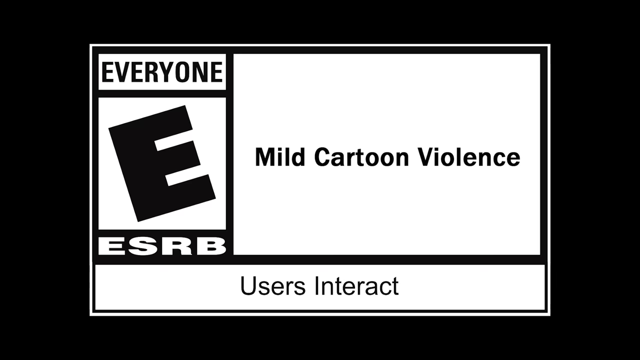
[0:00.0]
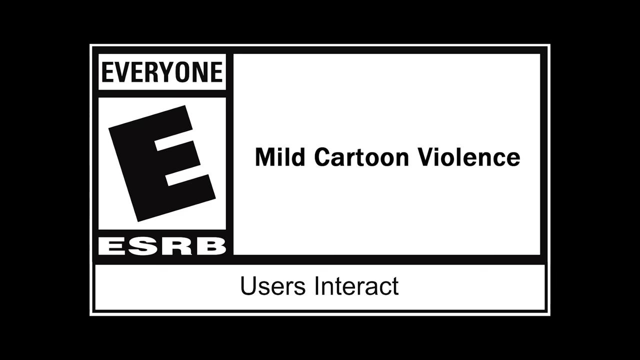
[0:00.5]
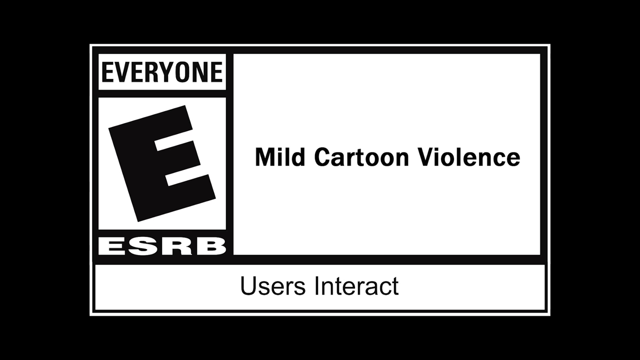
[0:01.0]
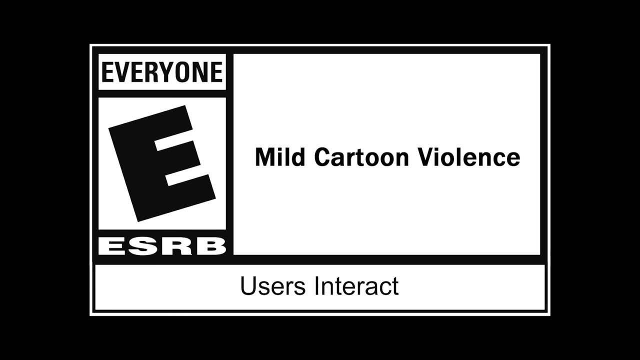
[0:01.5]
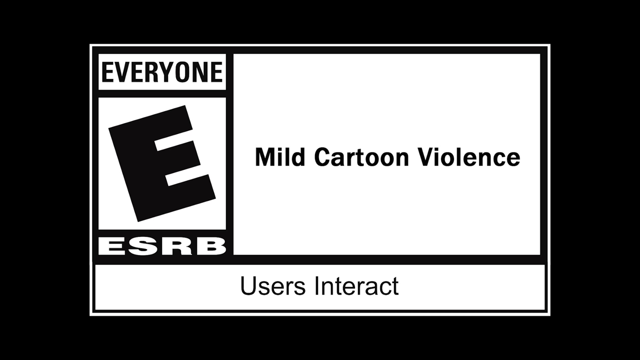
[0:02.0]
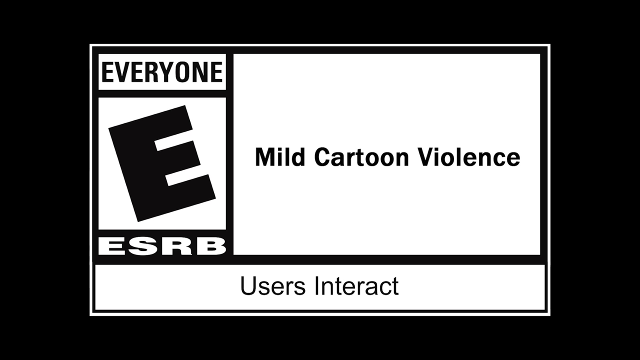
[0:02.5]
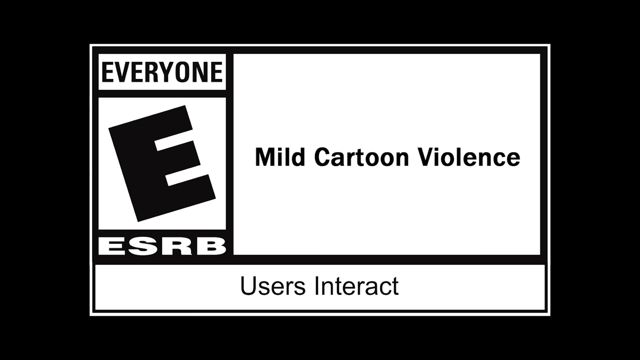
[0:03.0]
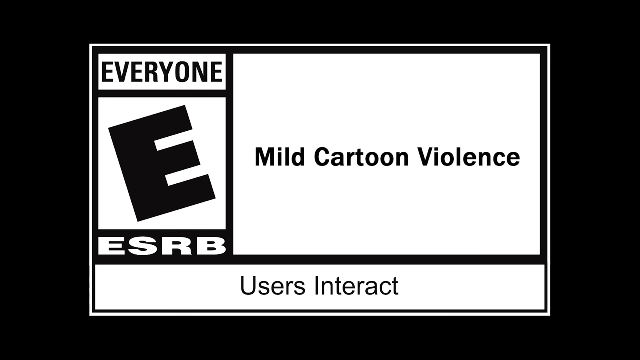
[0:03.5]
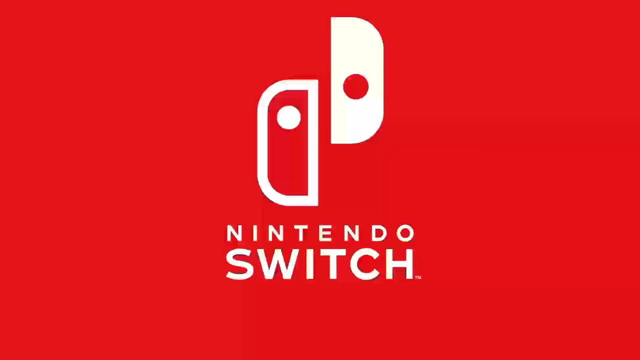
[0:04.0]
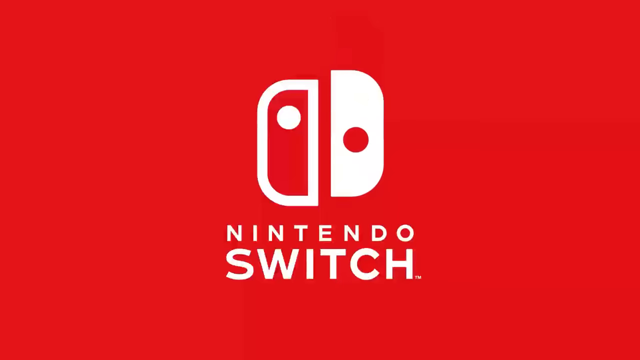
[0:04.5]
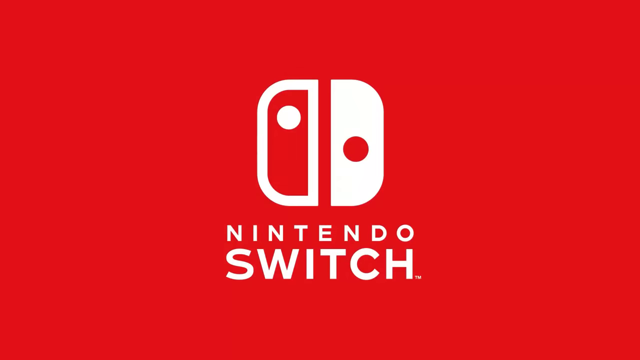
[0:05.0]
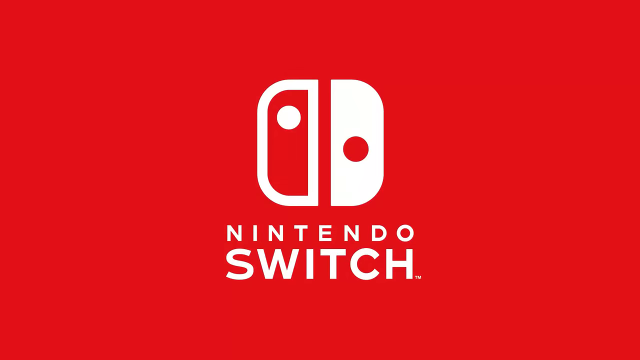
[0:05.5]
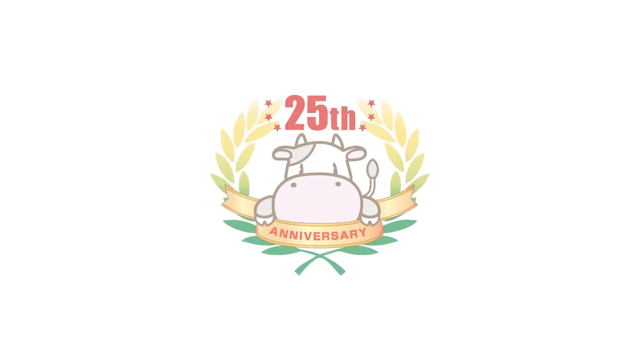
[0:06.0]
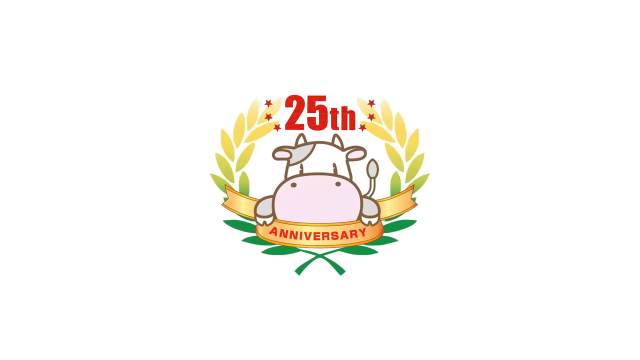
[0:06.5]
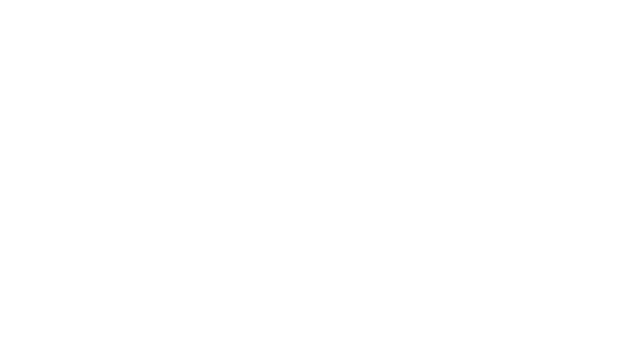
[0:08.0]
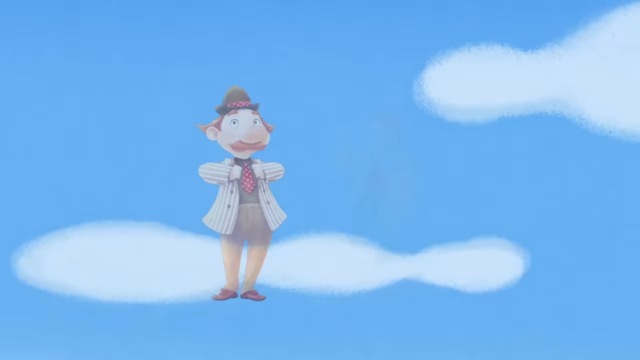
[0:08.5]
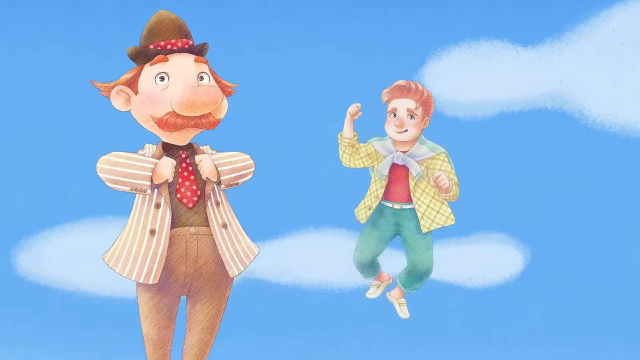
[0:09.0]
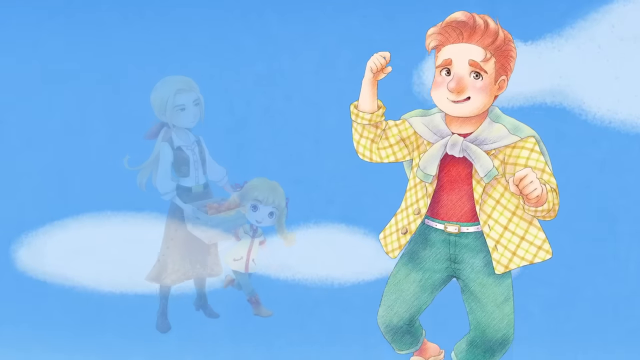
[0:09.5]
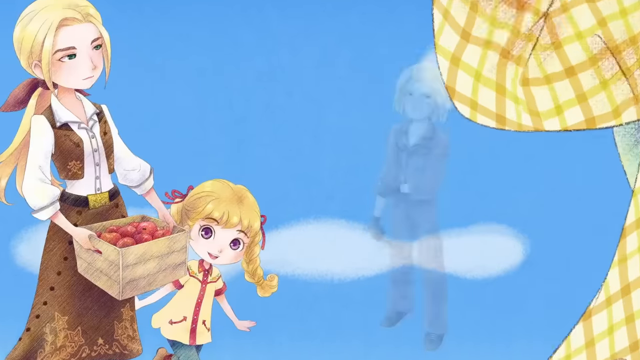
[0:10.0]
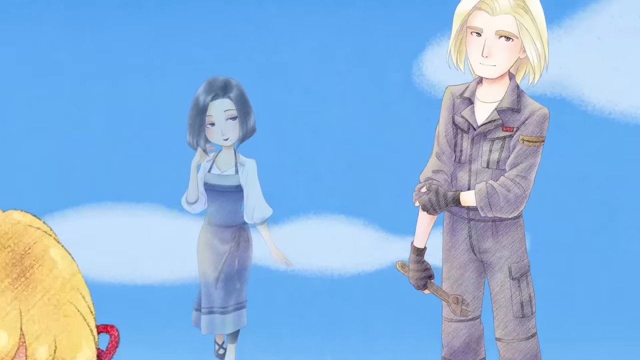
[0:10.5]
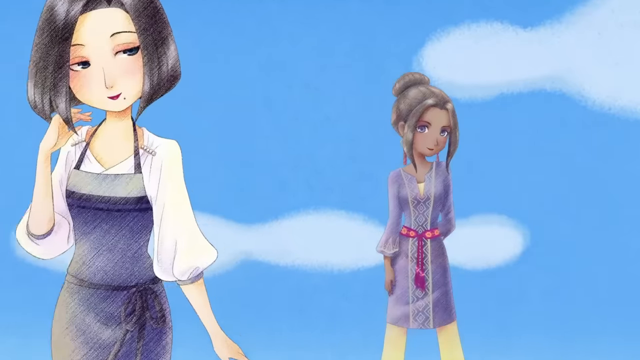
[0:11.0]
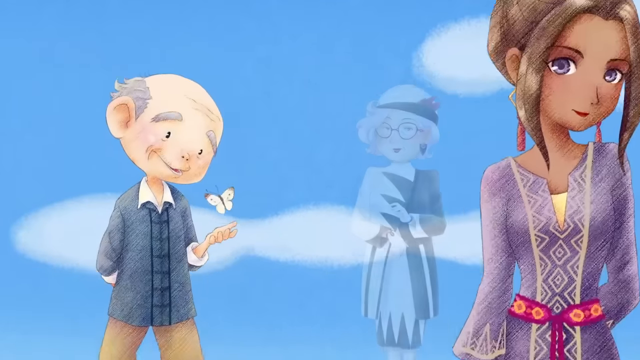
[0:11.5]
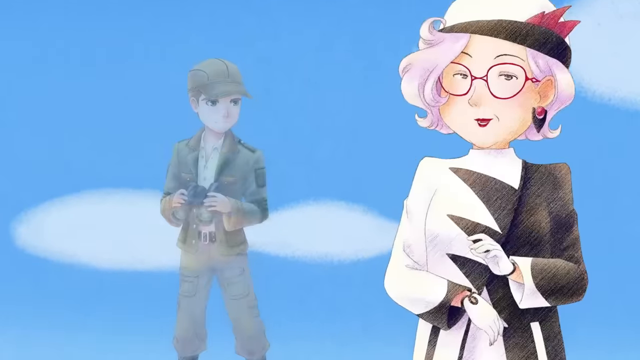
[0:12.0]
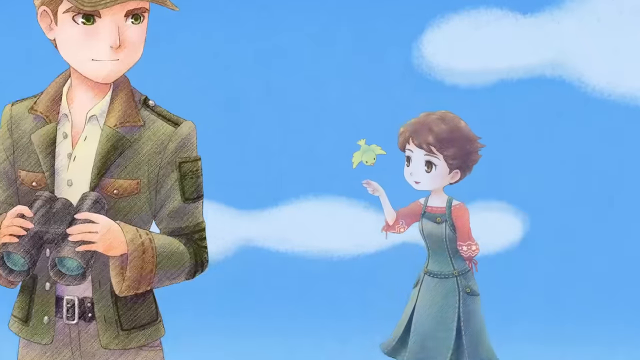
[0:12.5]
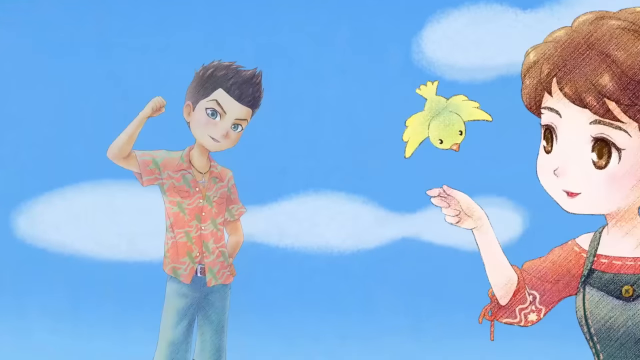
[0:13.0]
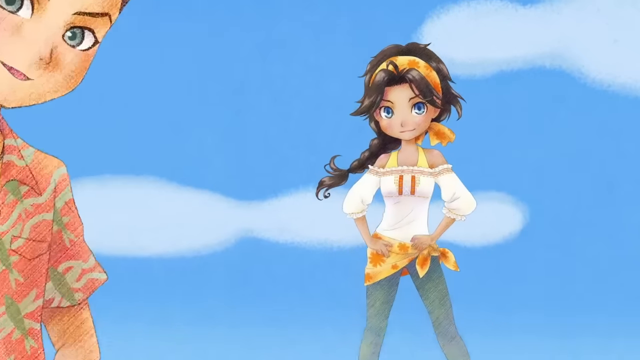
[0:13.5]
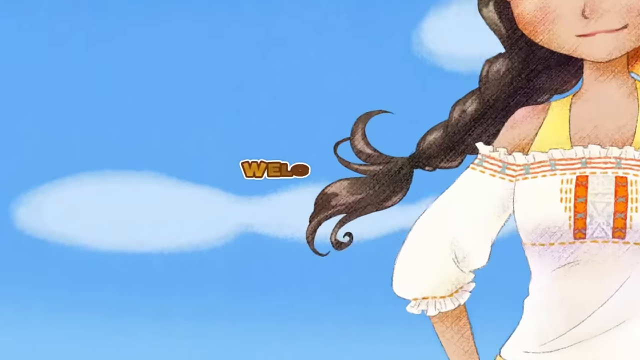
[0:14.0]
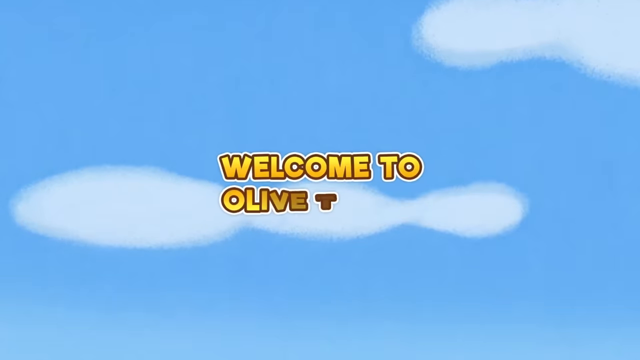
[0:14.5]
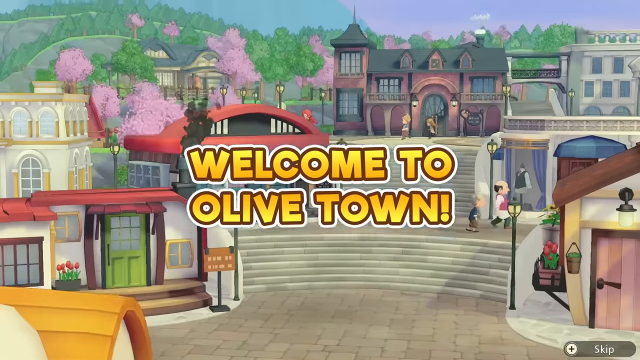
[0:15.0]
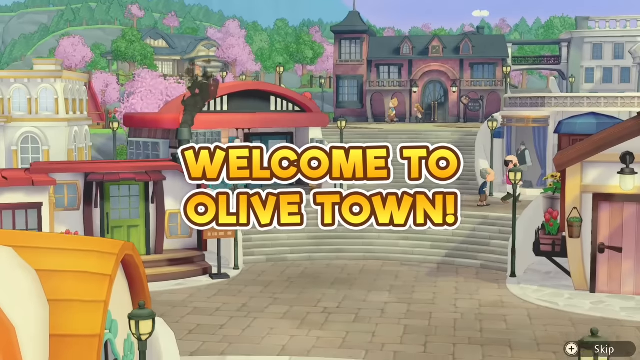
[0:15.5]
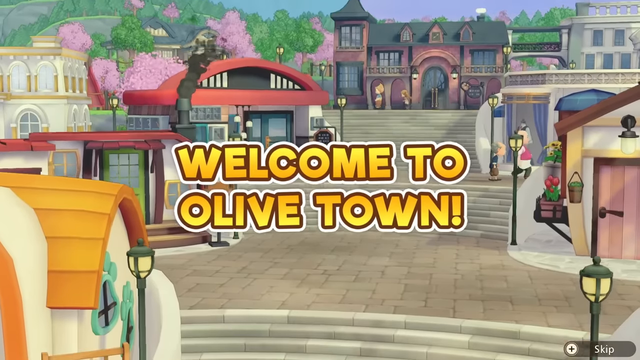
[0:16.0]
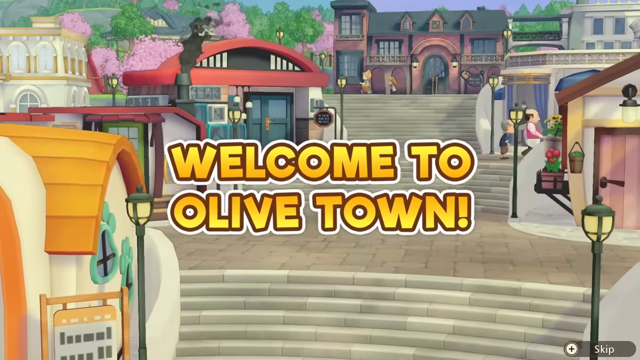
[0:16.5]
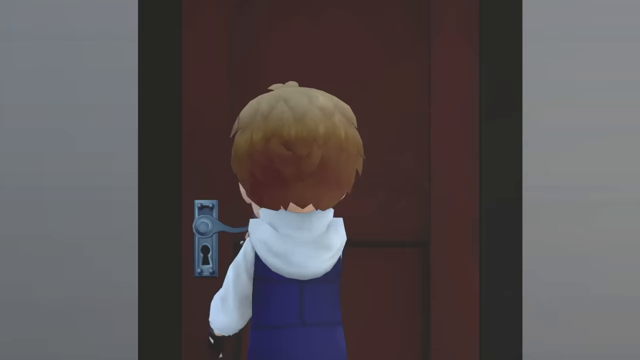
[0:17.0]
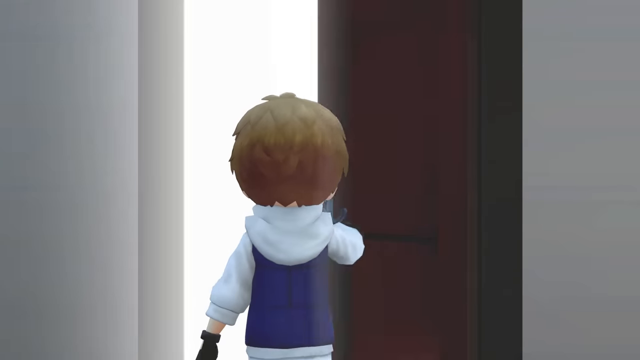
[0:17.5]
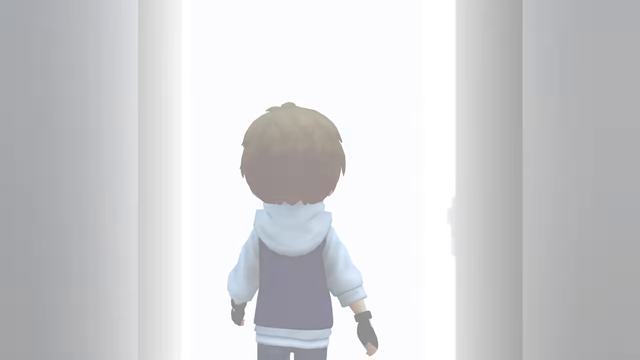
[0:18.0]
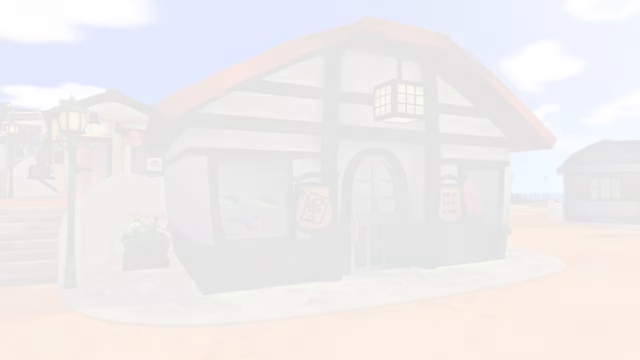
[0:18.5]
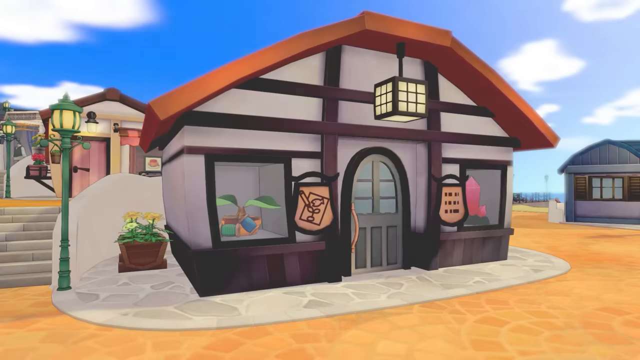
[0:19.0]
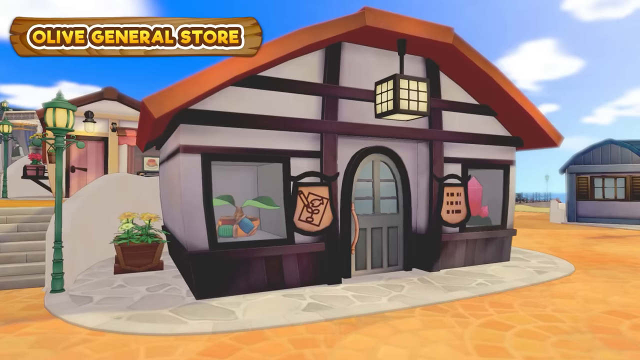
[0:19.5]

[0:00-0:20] Footage from a Nintendo Switch game marked 25th Anniversary features a bunch of characters; it looks somewhat like a kid's game or a low-key slice-of-life game. The screen says "welcome to Olive Town," probably the name of the game or the town. The town has some characters and shops, including the Olive General Store, which carries goods, food and drinks. The setting looks like a village.